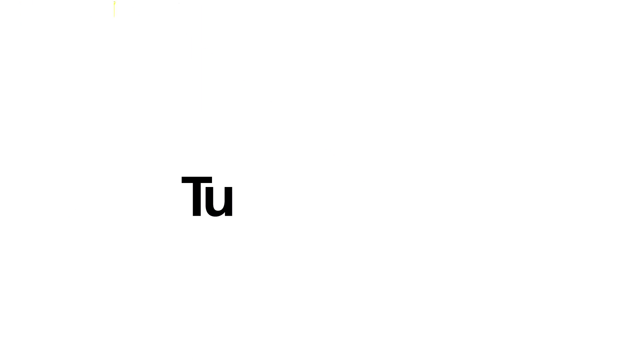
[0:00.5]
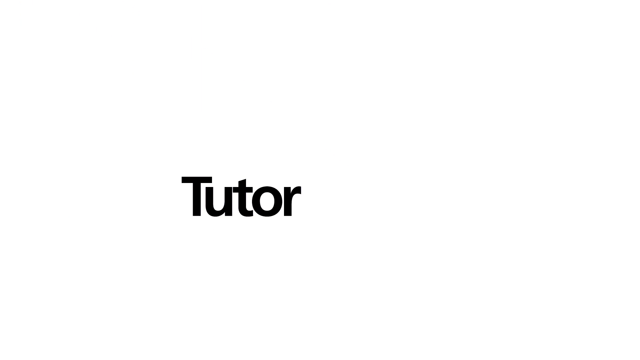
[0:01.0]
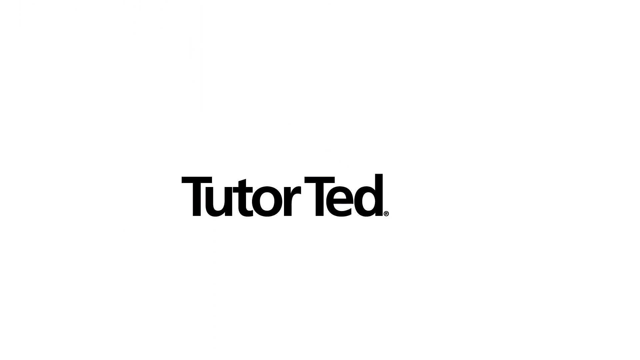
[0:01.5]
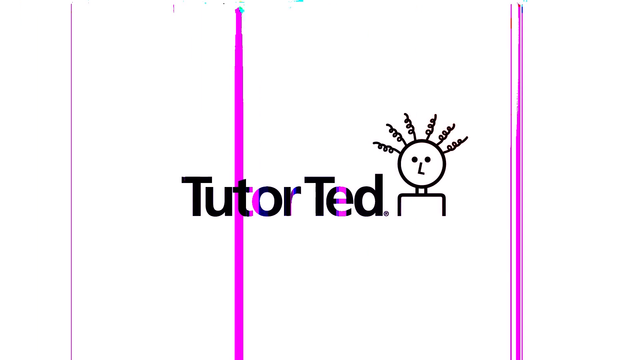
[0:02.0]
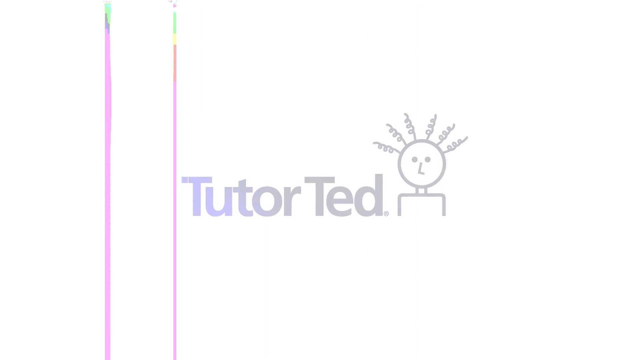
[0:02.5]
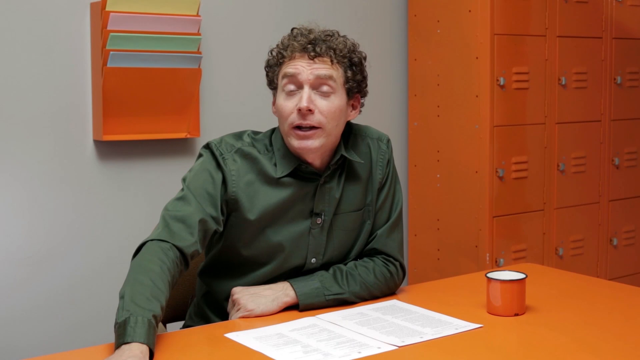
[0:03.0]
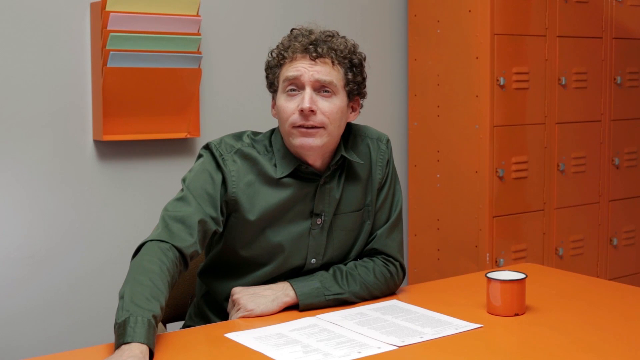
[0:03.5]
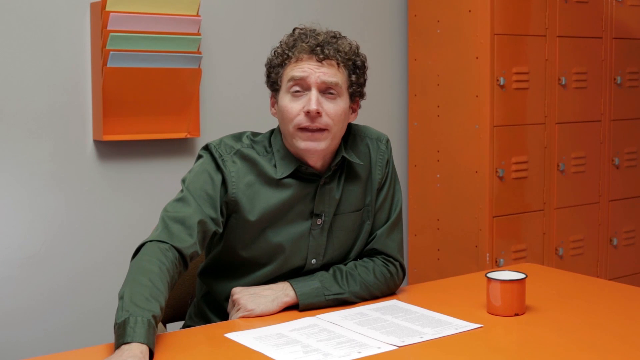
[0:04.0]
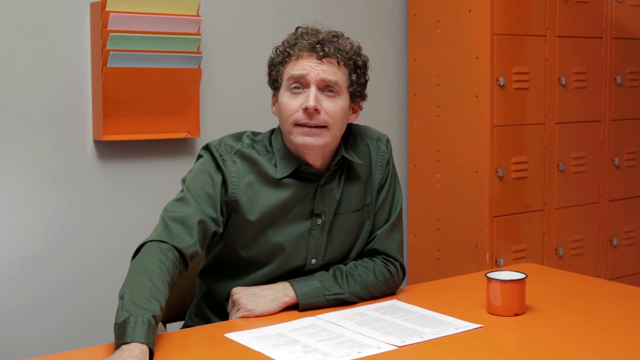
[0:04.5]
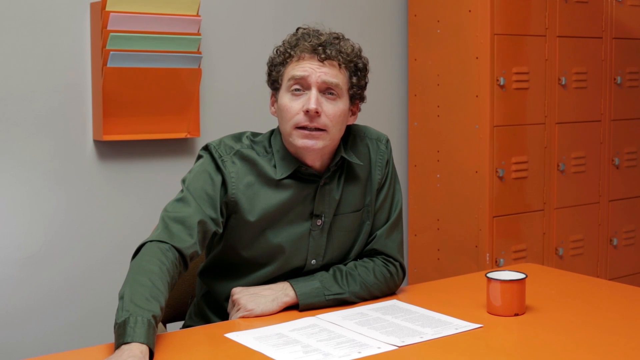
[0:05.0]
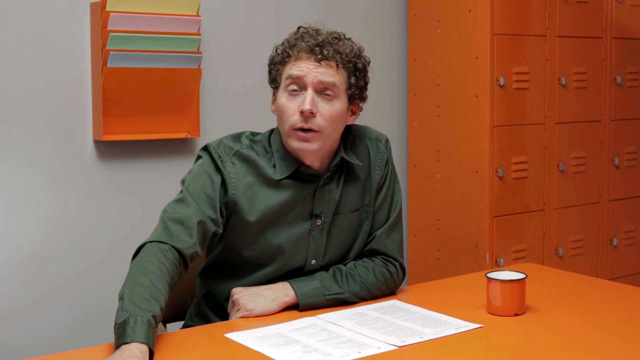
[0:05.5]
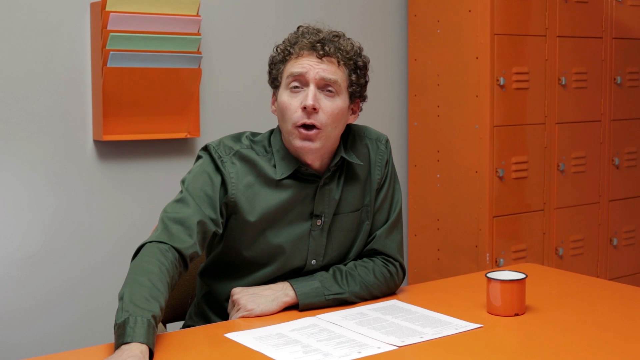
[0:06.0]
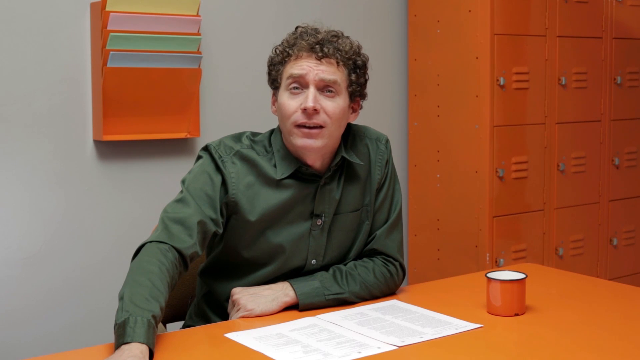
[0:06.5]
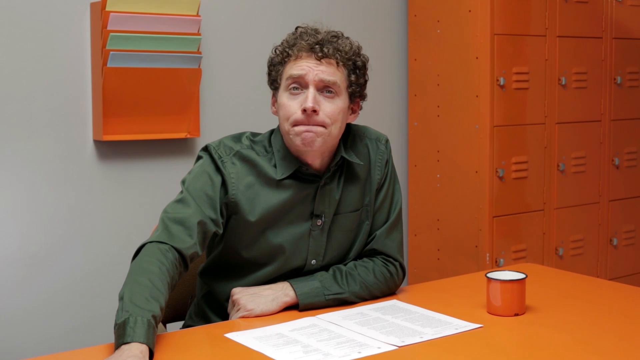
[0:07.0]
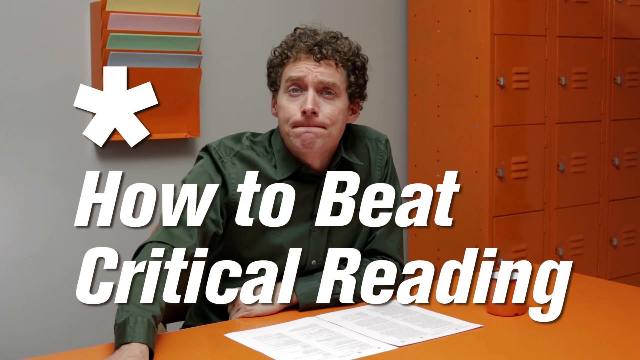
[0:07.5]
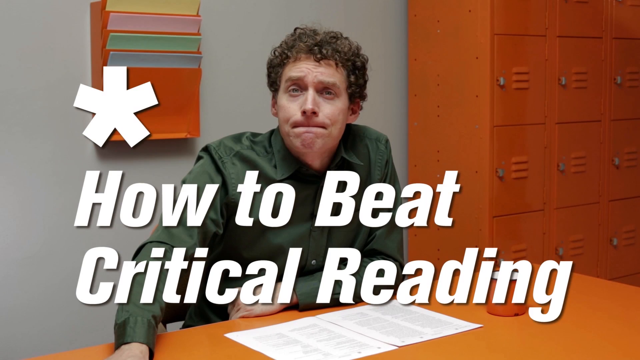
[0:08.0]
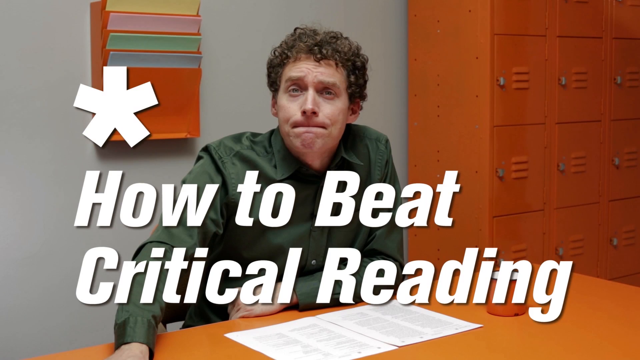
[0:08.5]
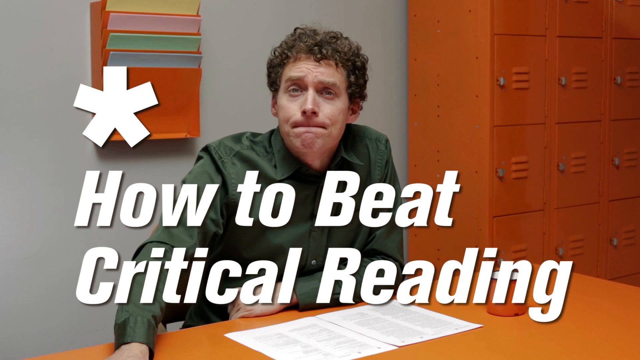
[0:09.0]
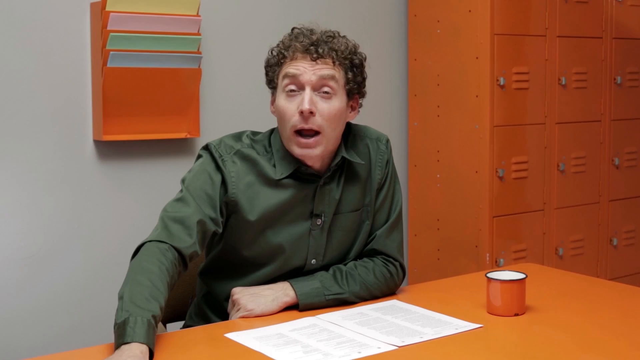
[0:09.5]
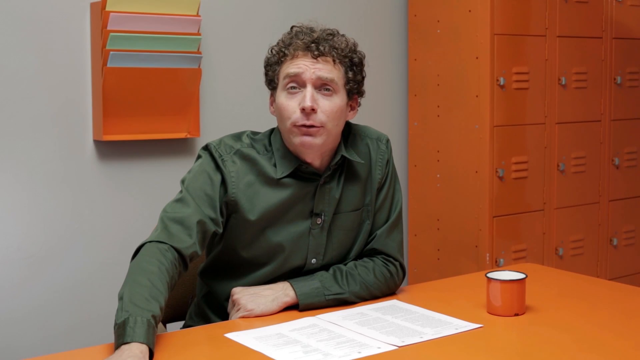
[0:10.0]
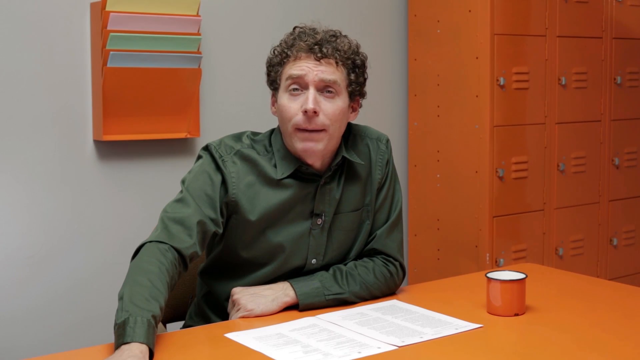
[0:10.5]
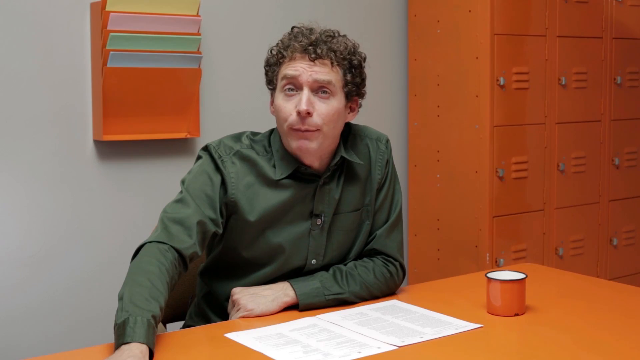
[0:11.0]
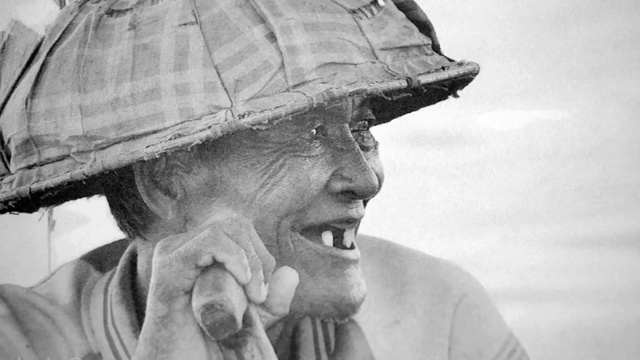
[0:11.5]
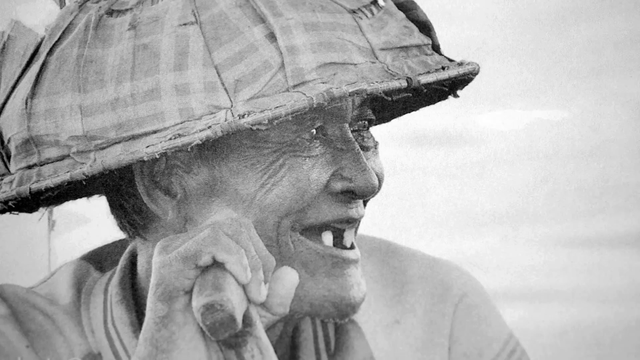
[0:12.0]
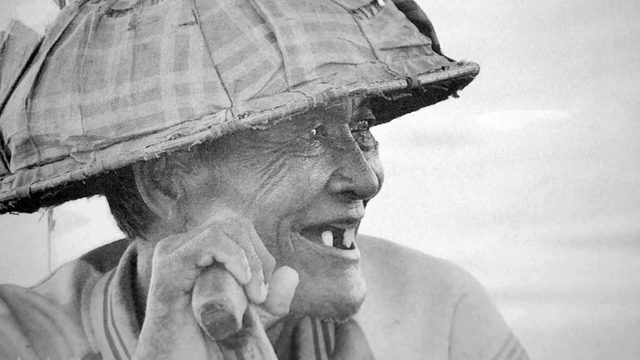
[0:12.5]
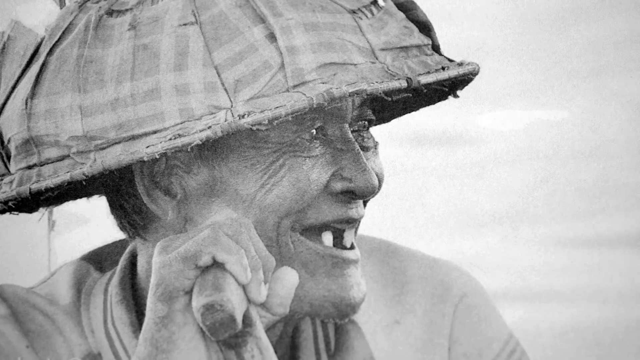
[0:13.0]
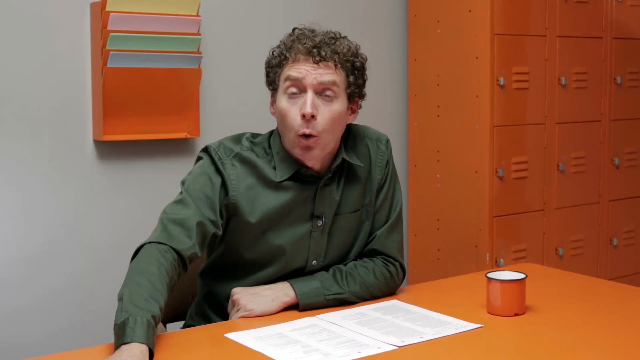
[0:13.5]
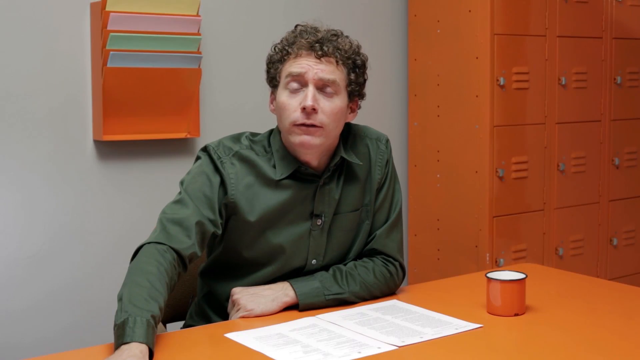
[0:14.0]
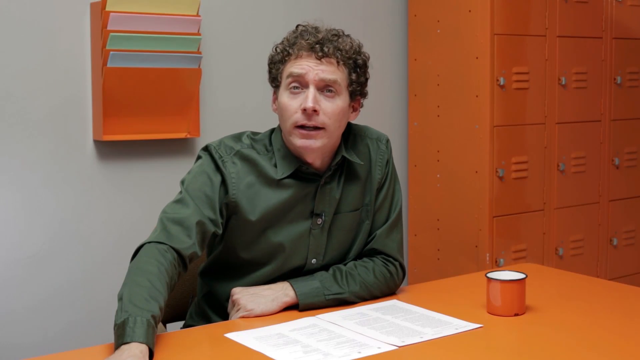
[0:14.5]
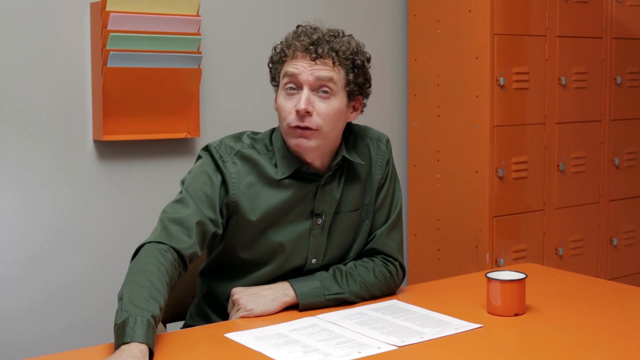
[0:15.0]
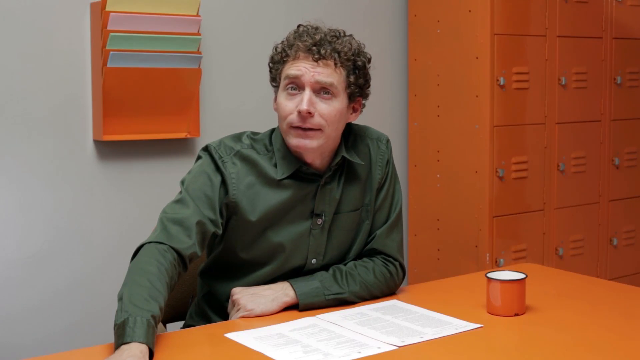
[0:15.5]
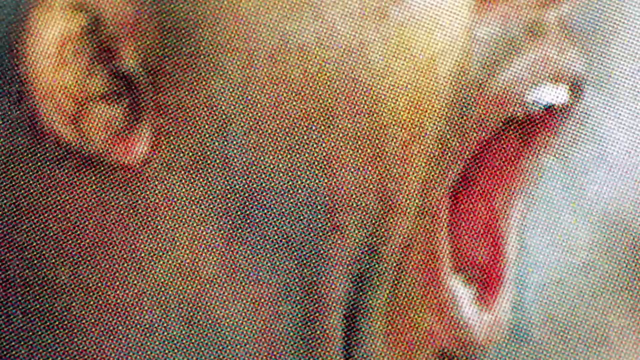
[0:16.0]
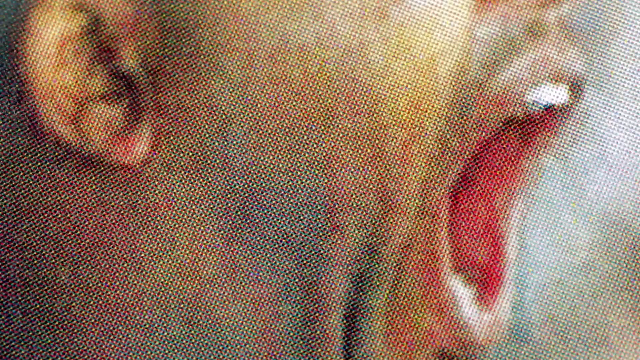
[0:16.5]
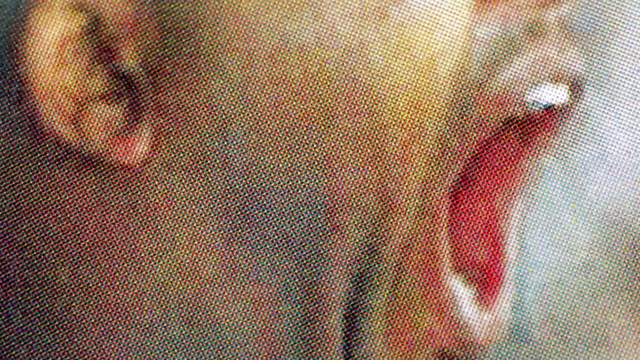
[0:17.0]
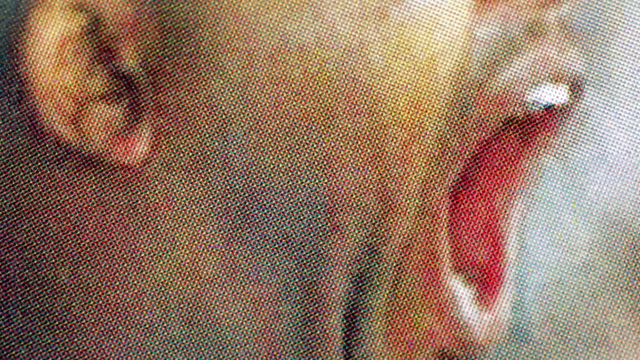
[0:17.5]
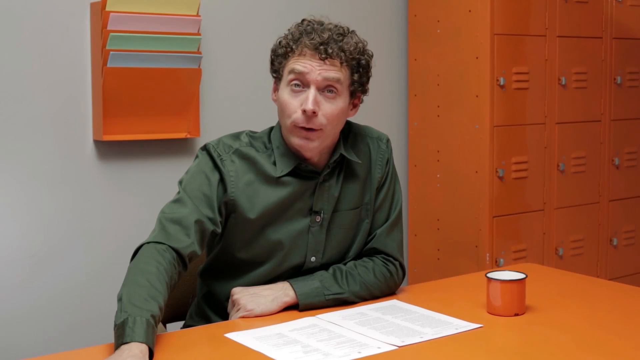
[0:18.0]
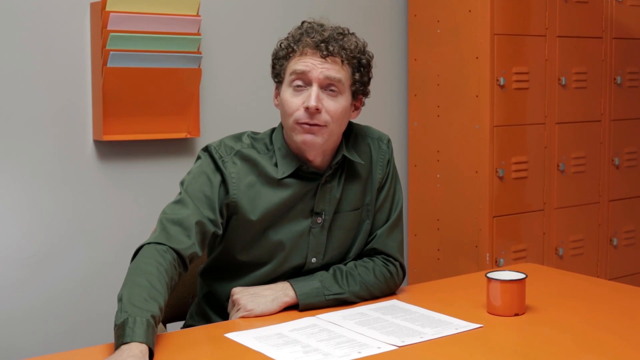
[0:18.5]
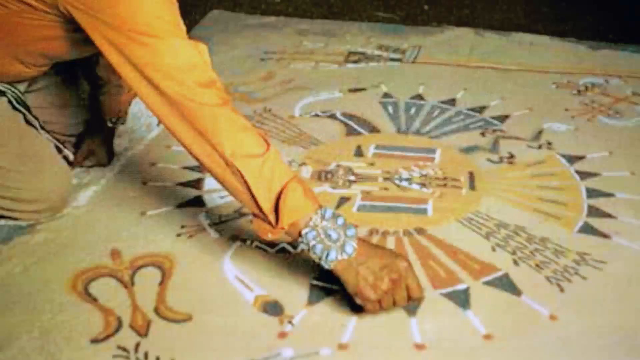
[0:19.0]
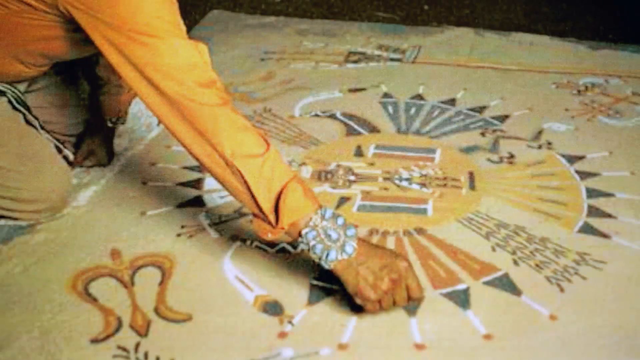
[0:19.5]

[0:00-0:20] Black text appears in the middle of the screen while solid vertical lines of different colors flash, then the background turns white. The words "Tutor Ted" appear with a doodle of a man whose squiggly hair stands straight up next to them. After the logo, a man sits at a desk. He is a white male with curly short brown hair and brown eyes, wearing a green long-sleeve button-up shirt with a collar. In the background, an orange file folder is mounted to the wall, holding various sheets of paper of different colors. On the right is an orange metal locker storage unit with 12 lockers visible. The table is orange, and on top of the desk there is an orange mug and two sheets of white paper. The man is talking and has one arm resting. The words "how to beat critical reading" appear in bold white text and quickly flash away. The man continues to talk, and then a black-and-white image of a Chinese man appears; he is missing several teeth, has some sort of makeshift headpiece on his head, and is holding a cane, and he is seen only from the face up. The video returns to the man talking, then zooms in on a very pixelated image that looks like someone screaming with their mouth open; only the mouth and ear are visible. The video returns to the man talking, and then another image appears of what looks like a poster on the floor, tribal in nature.